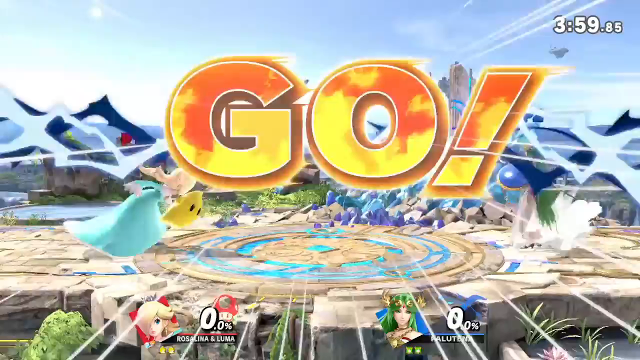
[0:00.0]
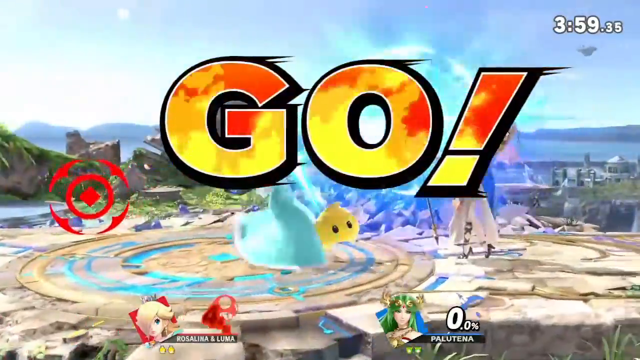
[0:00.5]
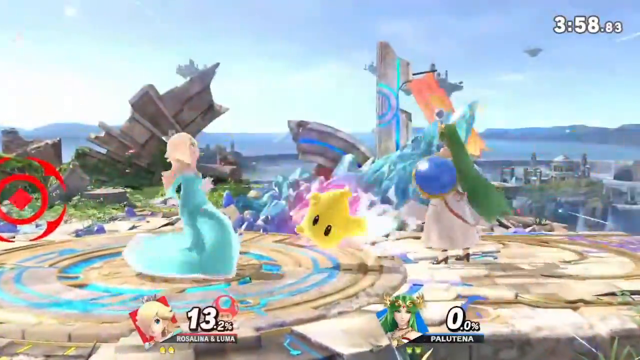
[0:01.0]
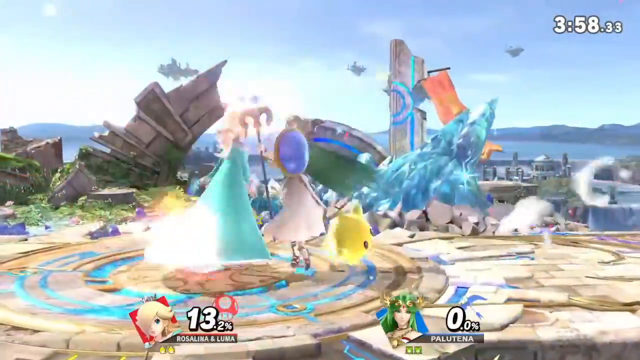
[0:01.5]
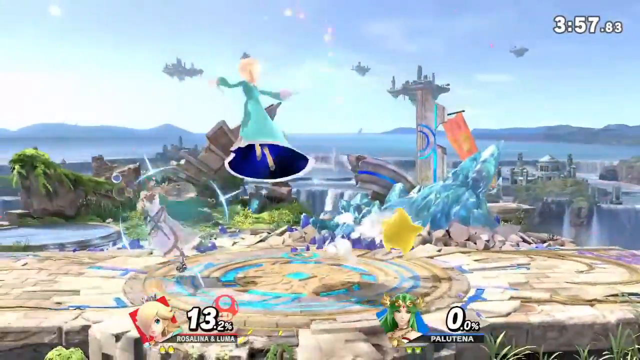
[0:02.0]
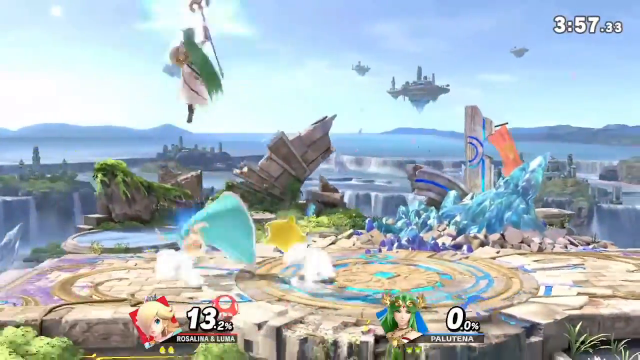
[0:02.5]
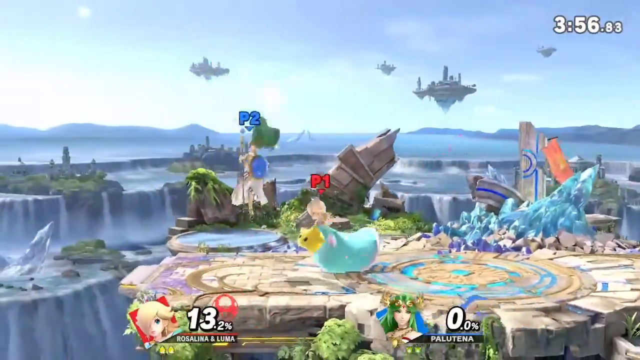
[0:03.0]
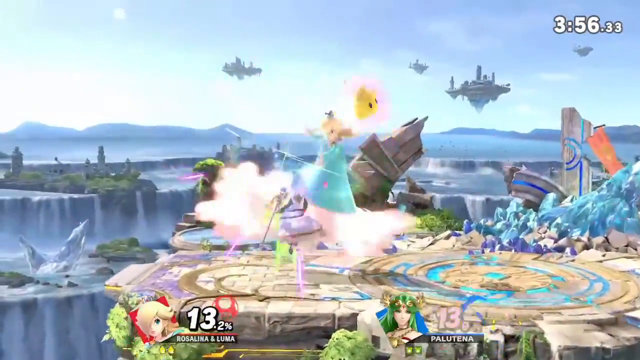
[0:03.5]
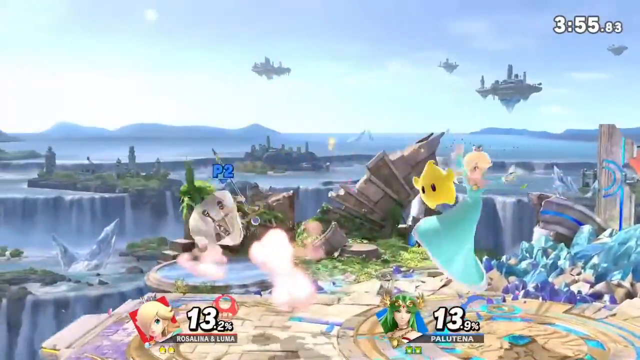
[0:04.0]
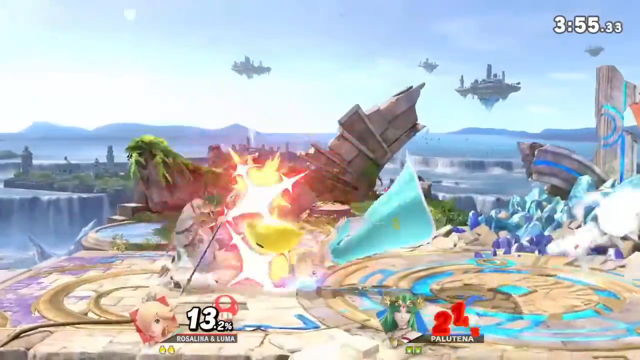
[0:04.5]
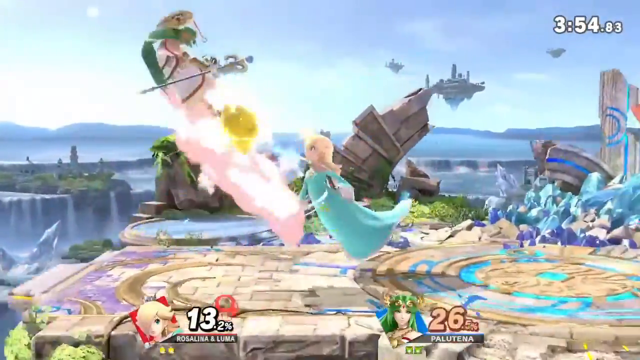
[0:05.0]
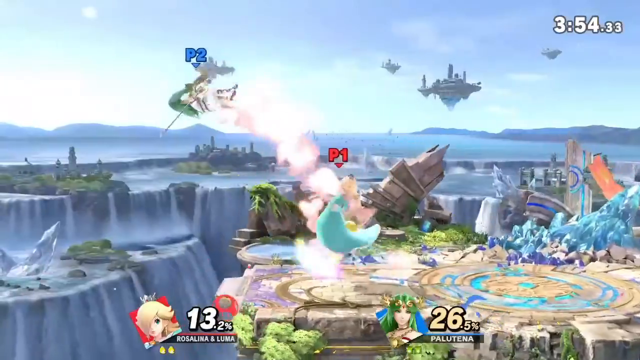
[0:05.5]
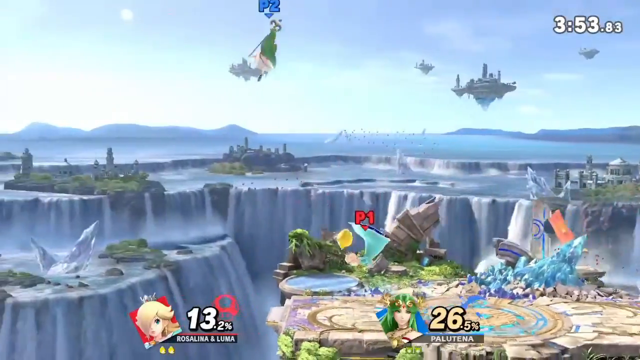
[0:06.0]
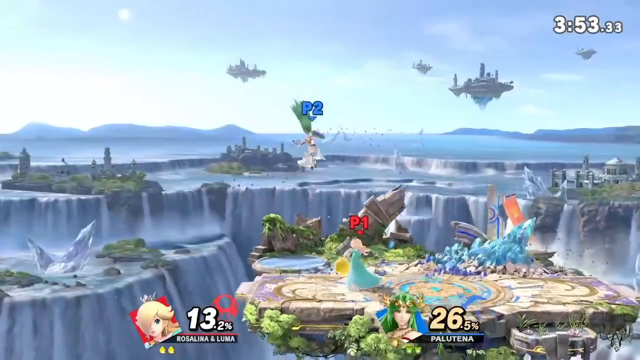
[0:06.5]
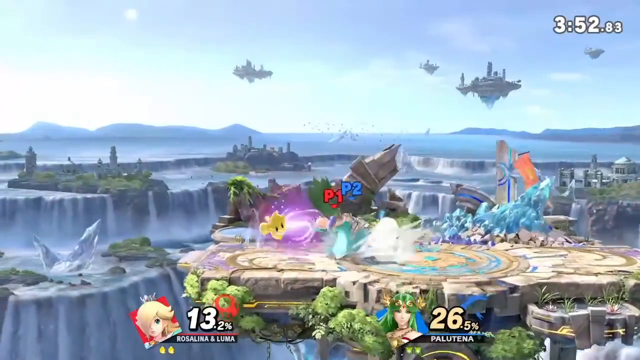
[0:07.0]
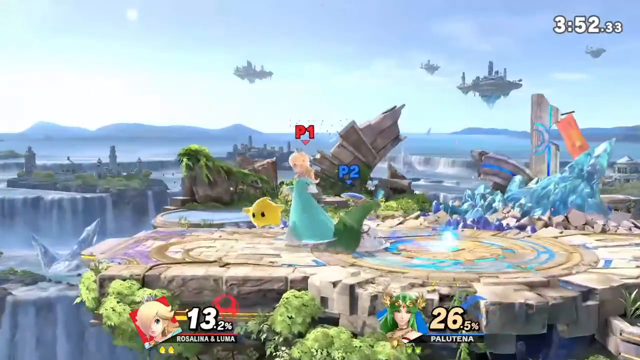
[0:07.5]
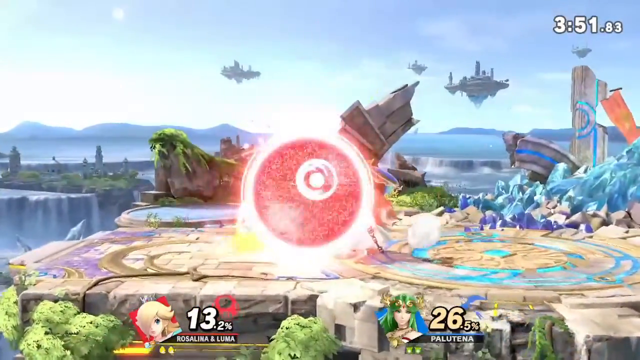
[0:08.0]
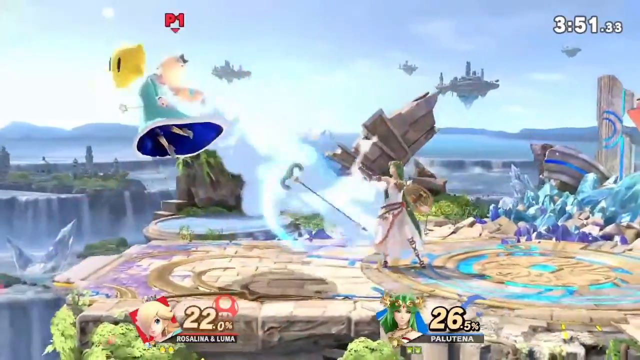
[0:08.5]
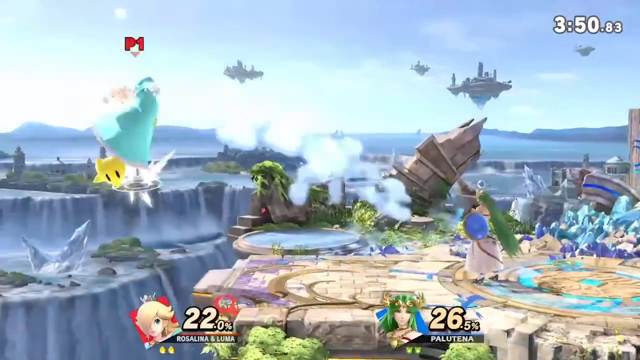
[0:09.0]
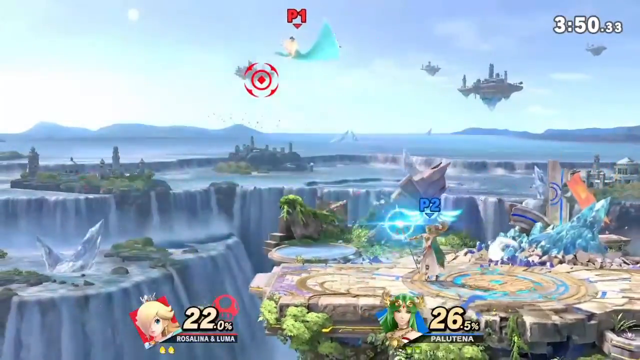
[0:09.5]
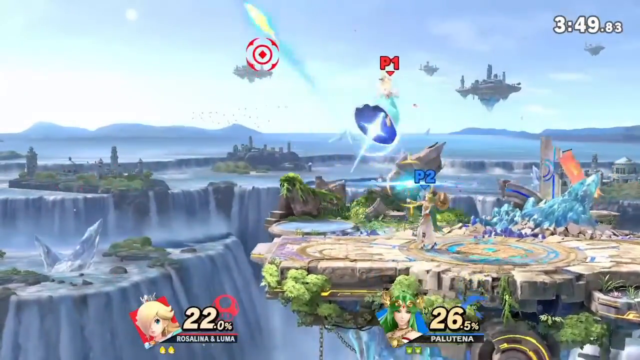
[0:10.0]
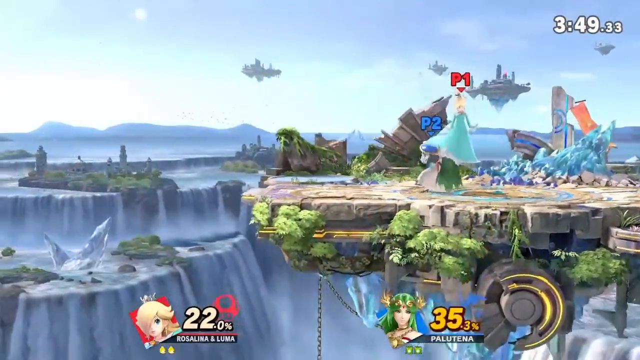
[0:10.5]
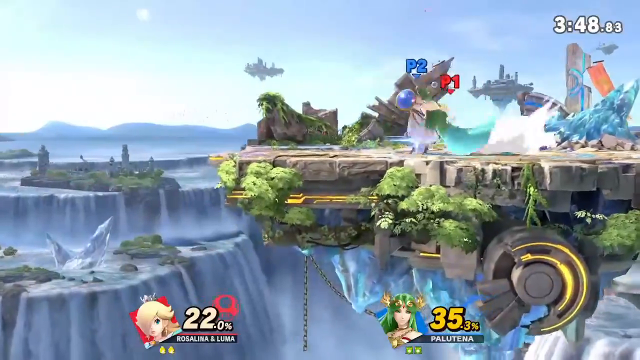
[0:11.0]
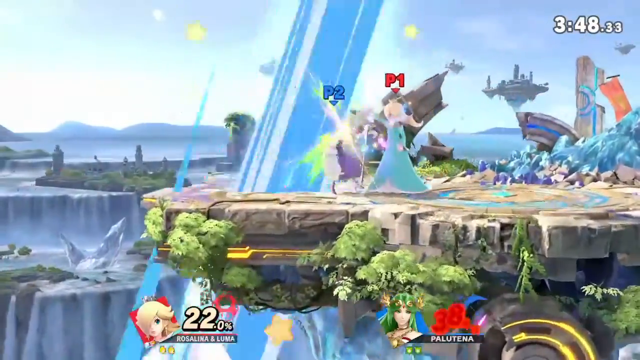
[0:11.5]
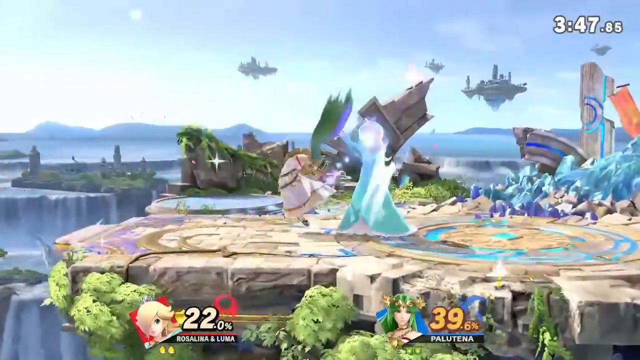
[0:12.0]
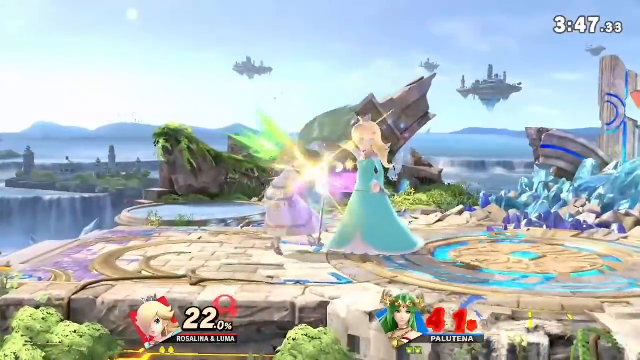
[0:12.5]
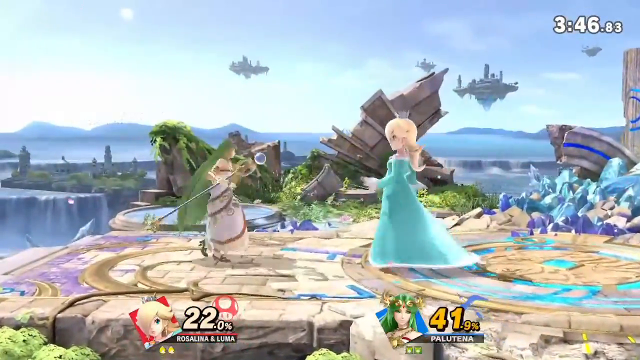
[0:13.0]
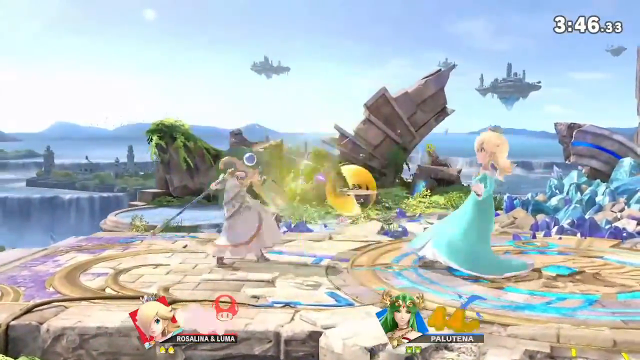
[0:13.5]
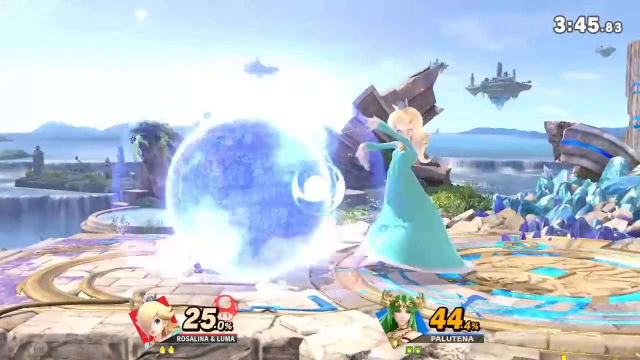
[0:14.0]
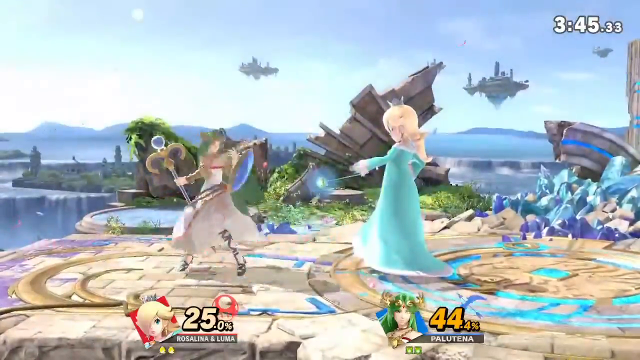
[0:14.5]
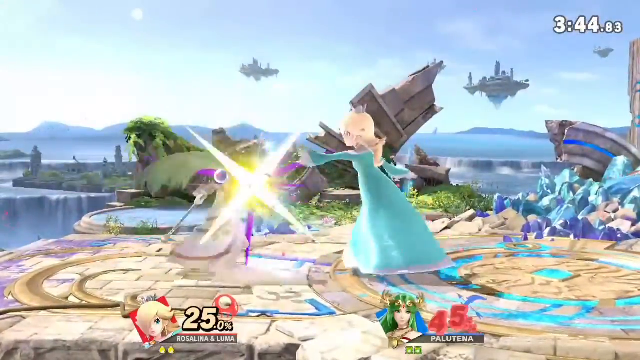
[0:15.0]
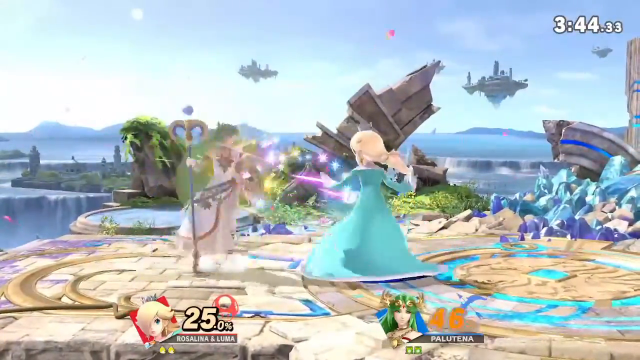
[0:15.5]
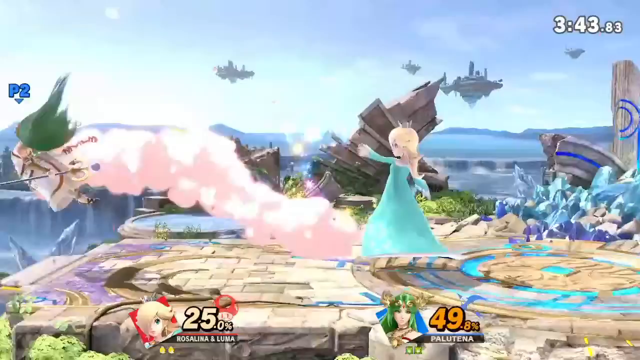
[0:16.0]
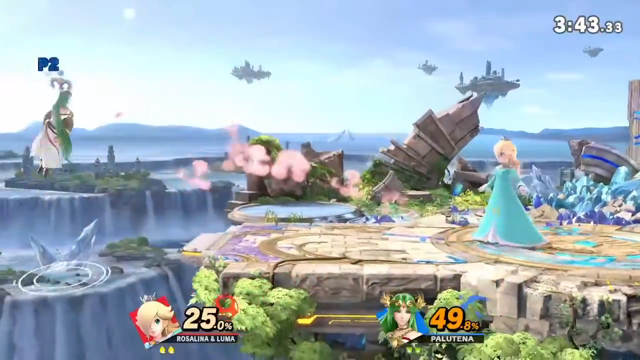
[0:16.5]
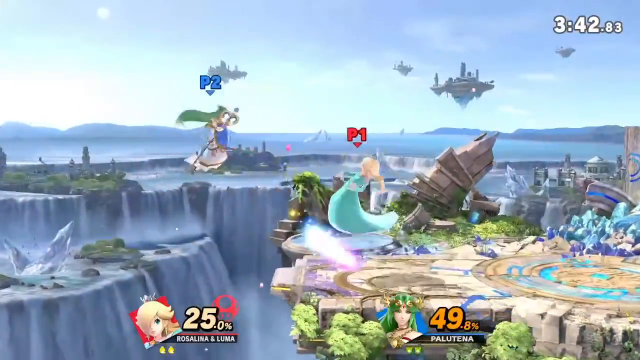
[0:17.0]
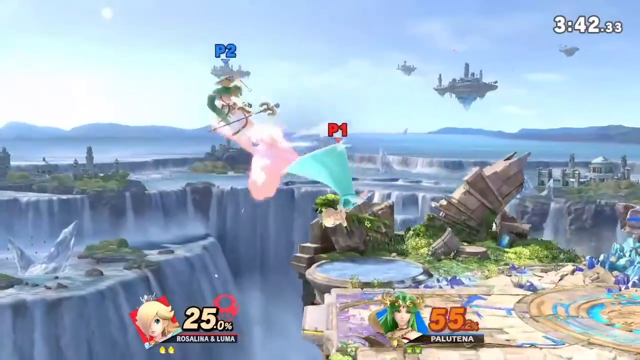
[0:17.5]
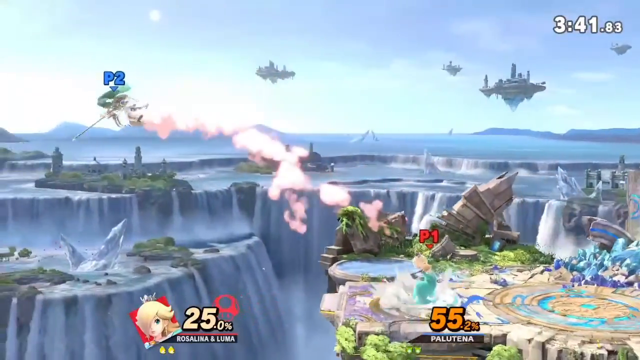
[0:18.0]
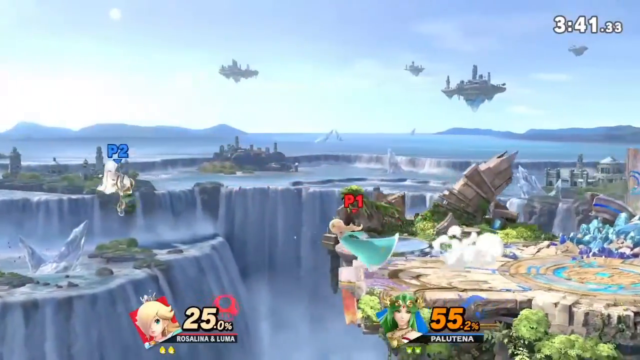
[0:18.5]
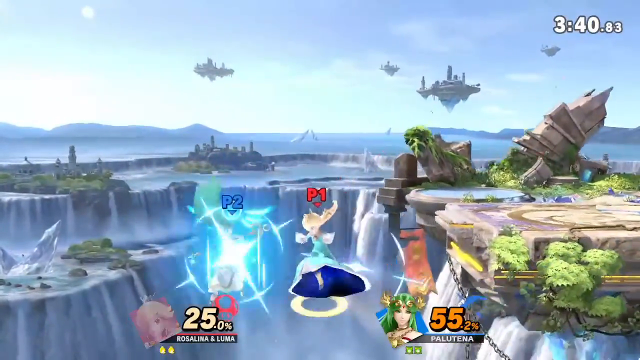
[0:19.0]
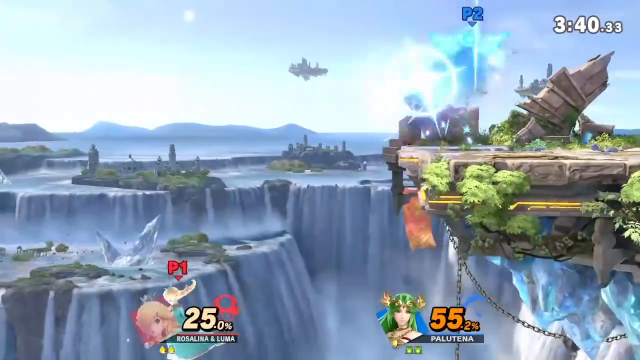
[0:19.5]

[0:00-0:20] A fighting-type video game begins with the word "GO" in big orange letters, and then player 1 and player 2 appear. Player 1 appears to be a princess in a teal dress, and player 2 is some sort of character, probably a mage or magician, who keeps disappearing, reappearing and jumping around. The two are standing on a raised platform, engaged in a 1v1 fight; the platform appears to be made of stone and floating in the air. The background has other floating landmasses, a large body of water, and mountains in the background and surrounding the landmass the two players are fighting on. There appear to be large stone steps and plateaus with trees, and multiple assorted waterfalls come from the large body of water in the background. A timer in white numbers is at the top right of the screen.